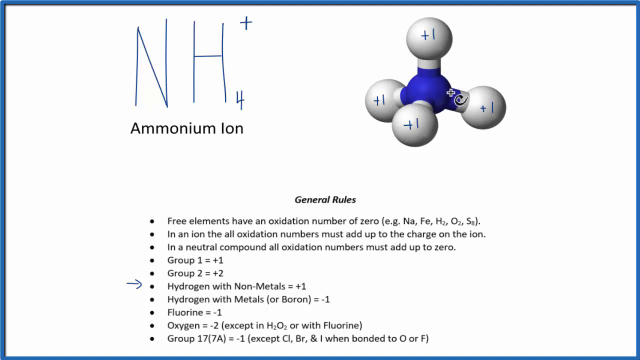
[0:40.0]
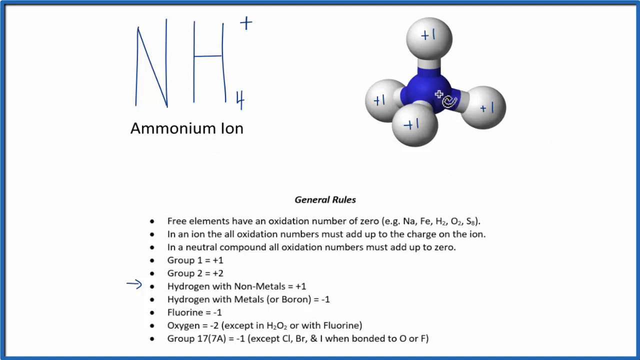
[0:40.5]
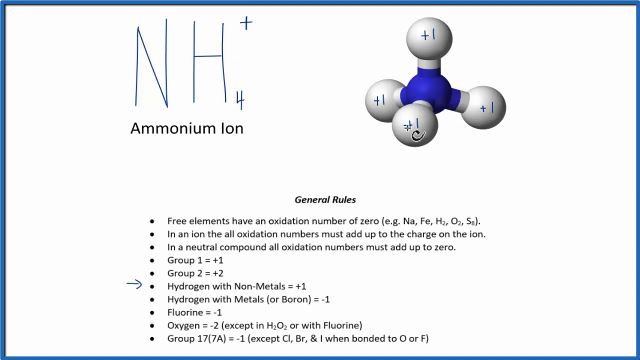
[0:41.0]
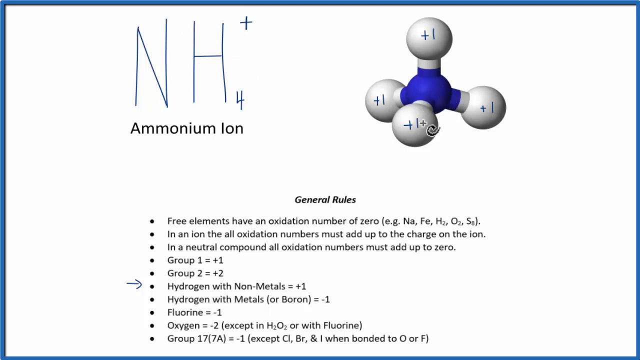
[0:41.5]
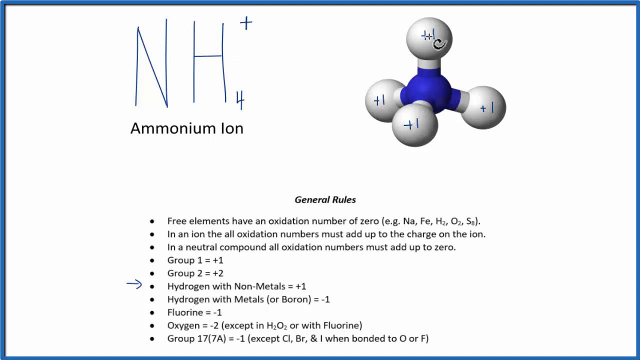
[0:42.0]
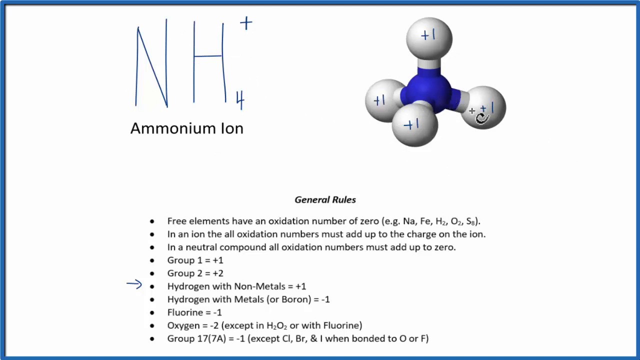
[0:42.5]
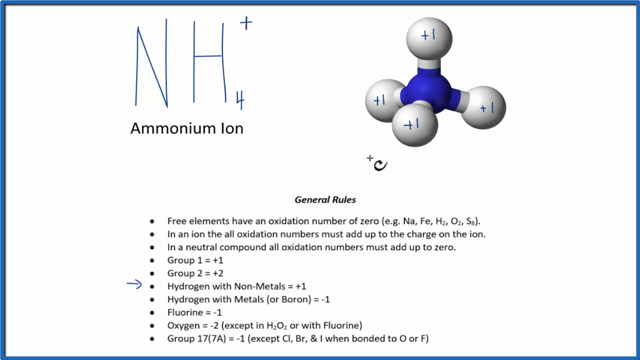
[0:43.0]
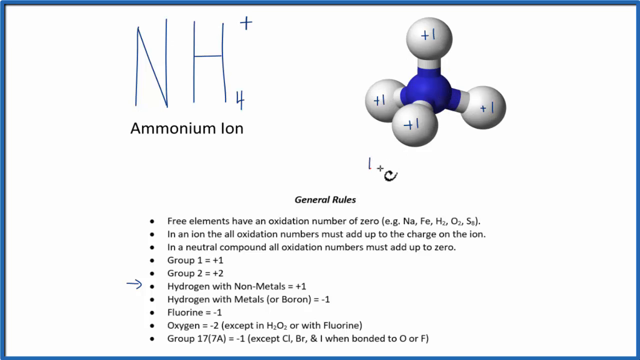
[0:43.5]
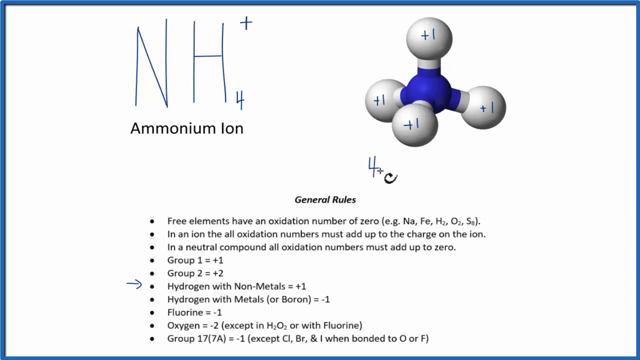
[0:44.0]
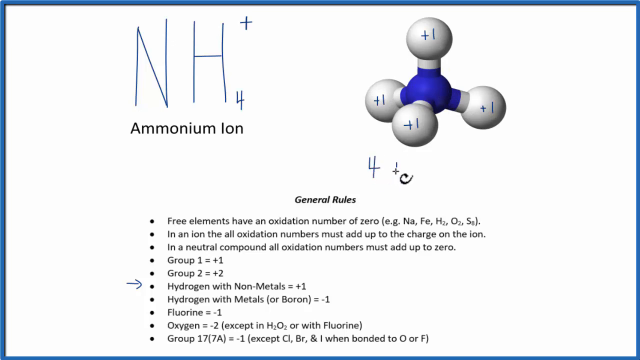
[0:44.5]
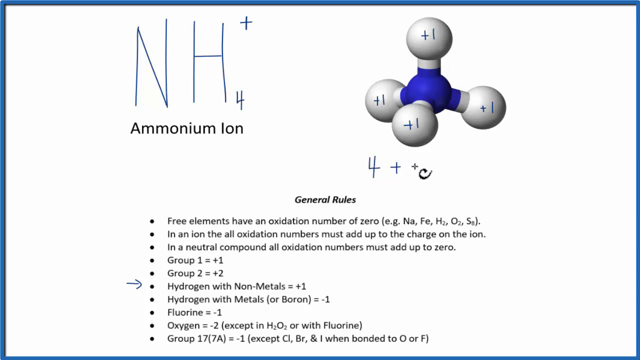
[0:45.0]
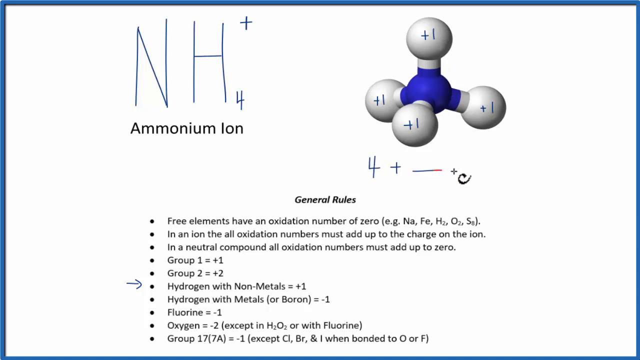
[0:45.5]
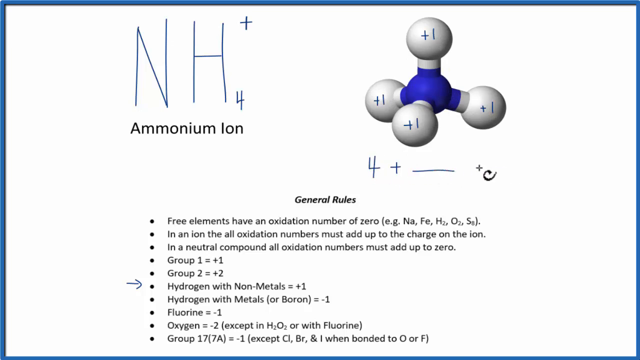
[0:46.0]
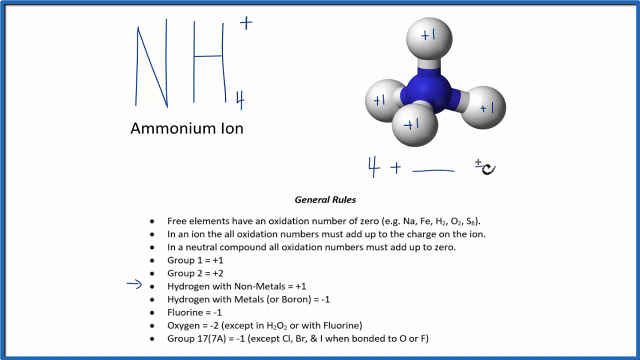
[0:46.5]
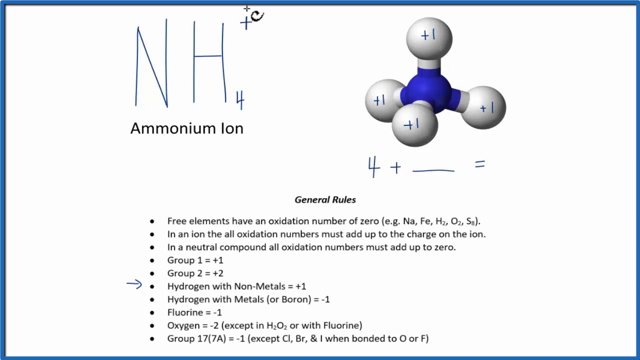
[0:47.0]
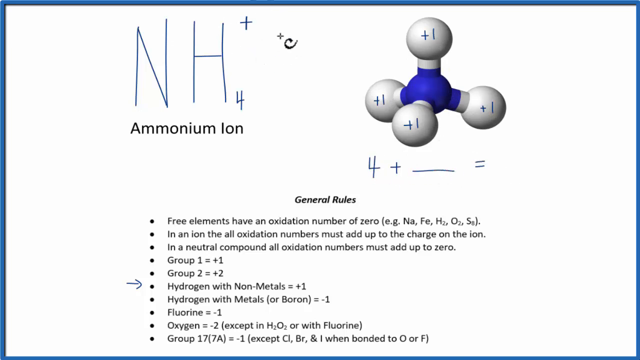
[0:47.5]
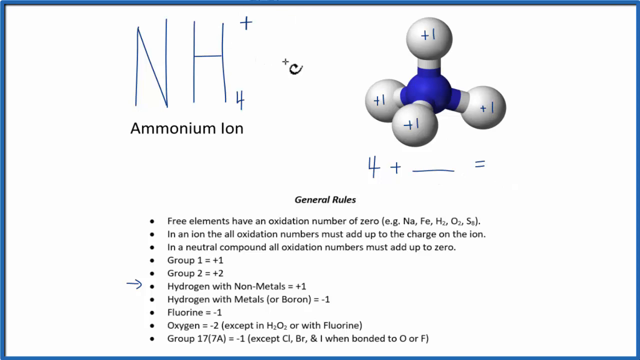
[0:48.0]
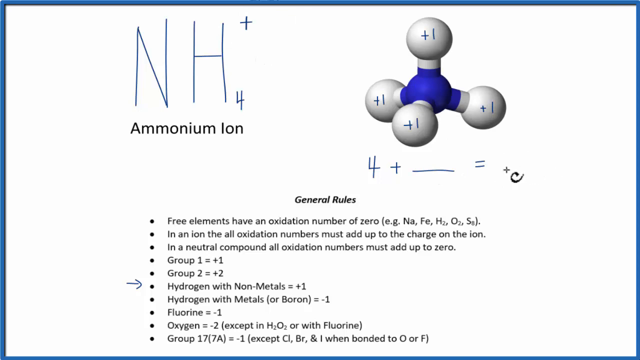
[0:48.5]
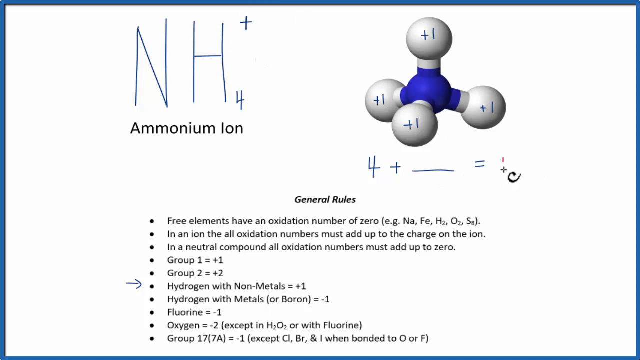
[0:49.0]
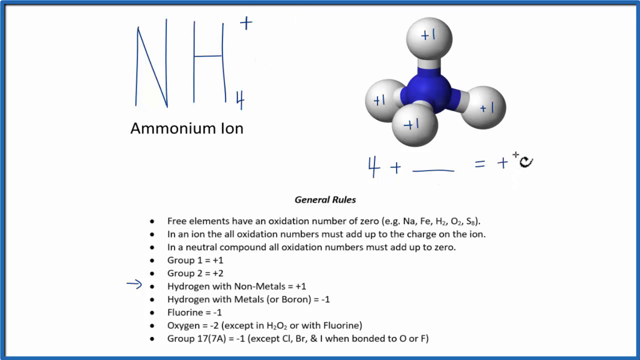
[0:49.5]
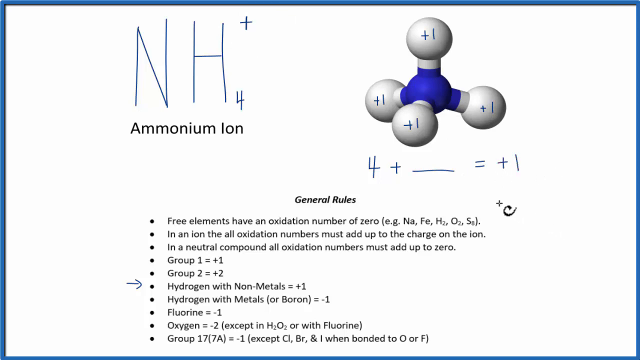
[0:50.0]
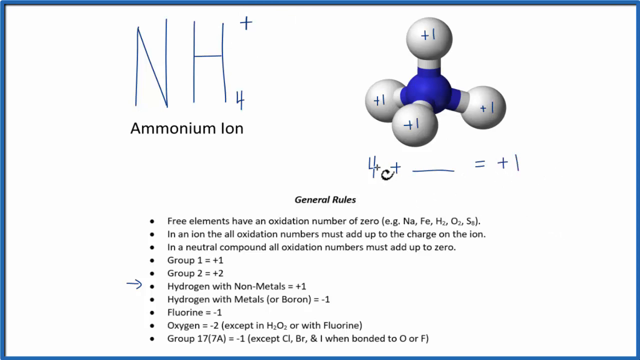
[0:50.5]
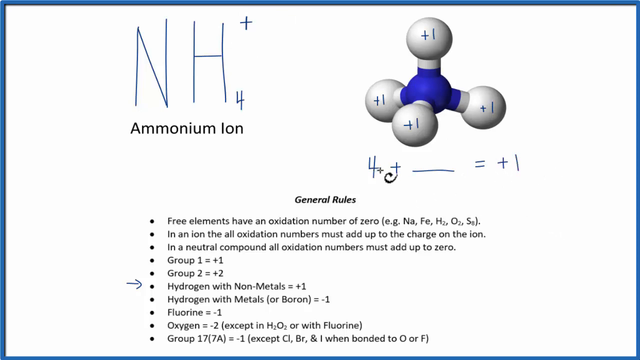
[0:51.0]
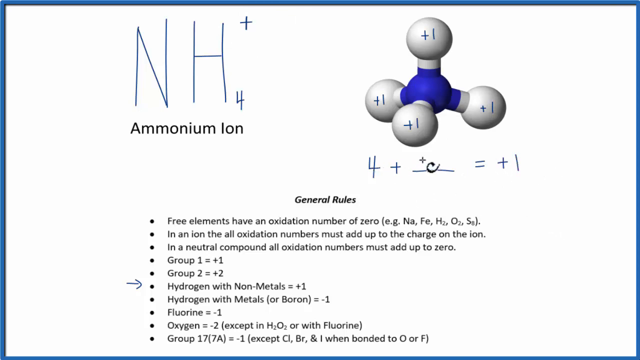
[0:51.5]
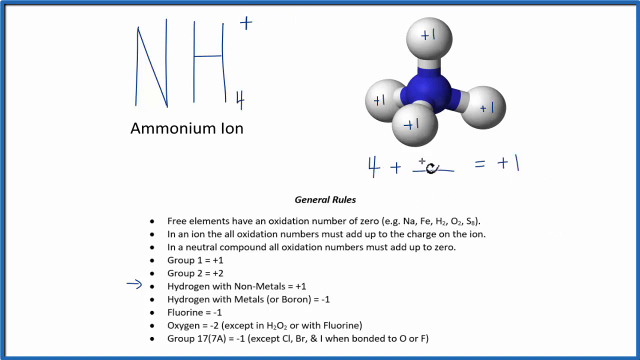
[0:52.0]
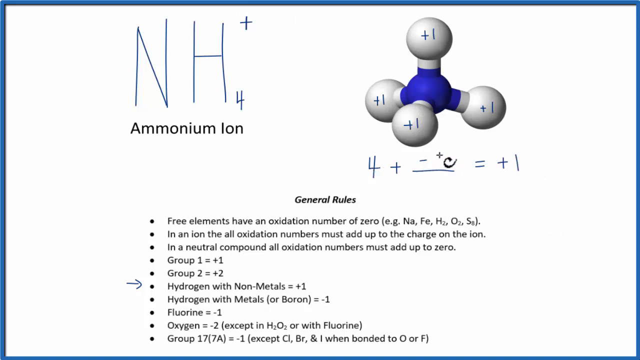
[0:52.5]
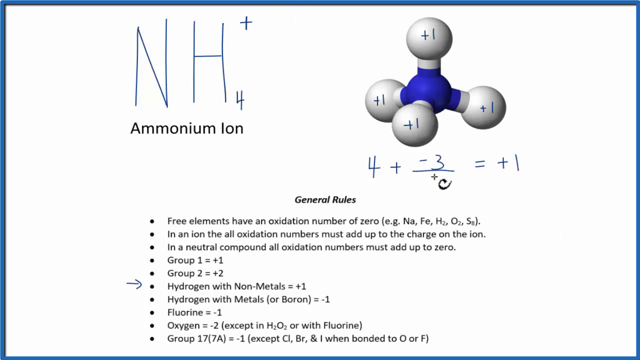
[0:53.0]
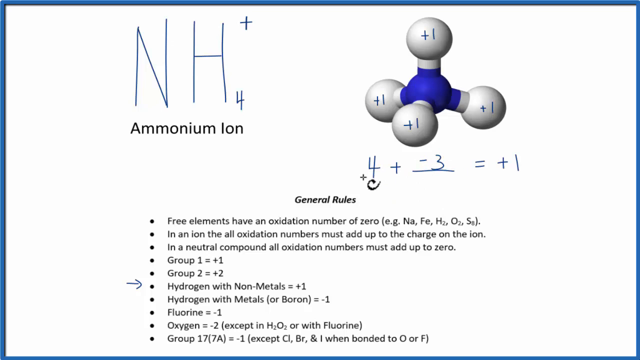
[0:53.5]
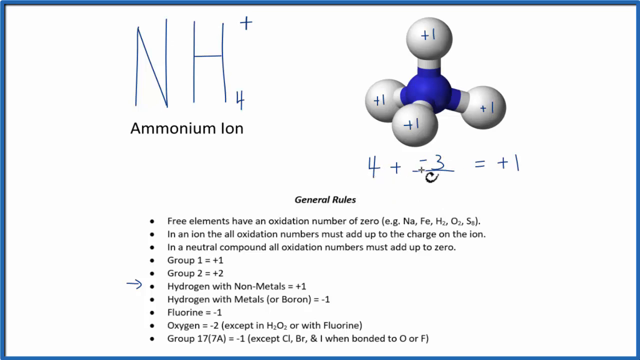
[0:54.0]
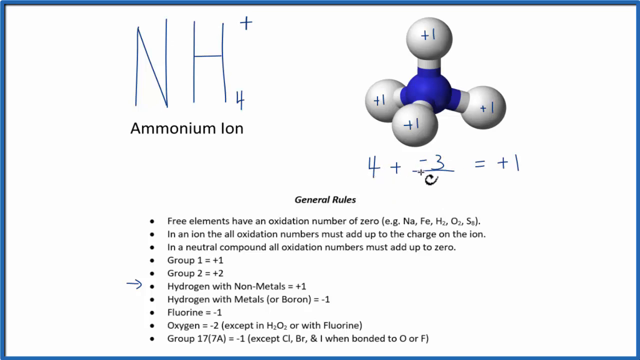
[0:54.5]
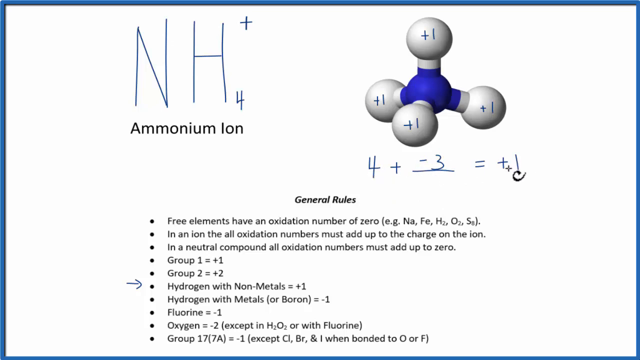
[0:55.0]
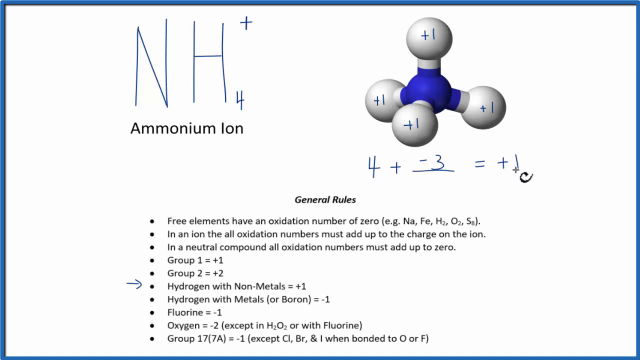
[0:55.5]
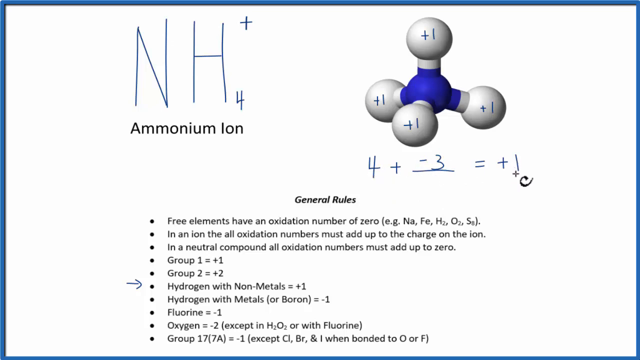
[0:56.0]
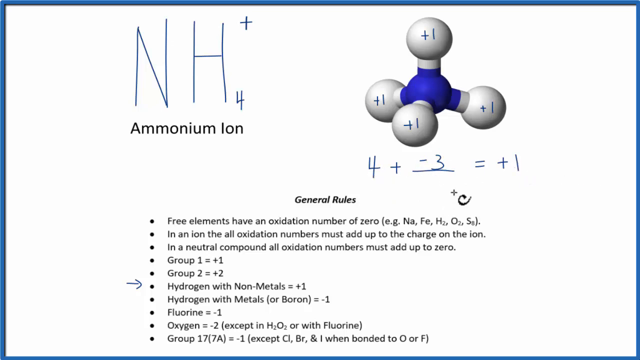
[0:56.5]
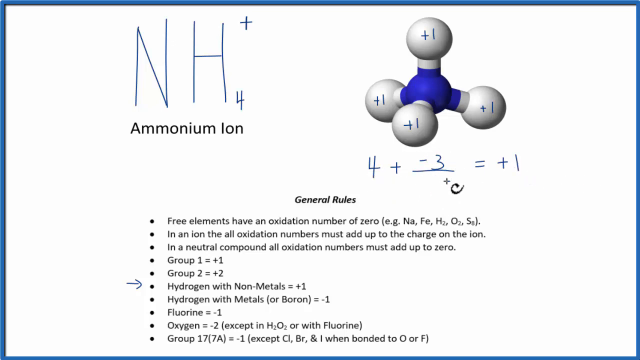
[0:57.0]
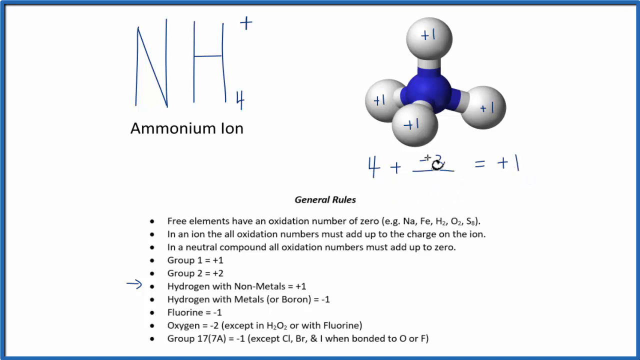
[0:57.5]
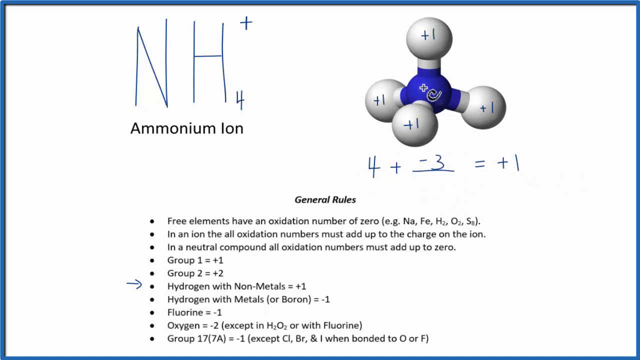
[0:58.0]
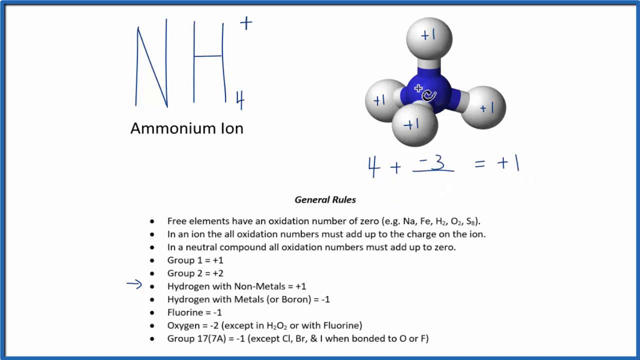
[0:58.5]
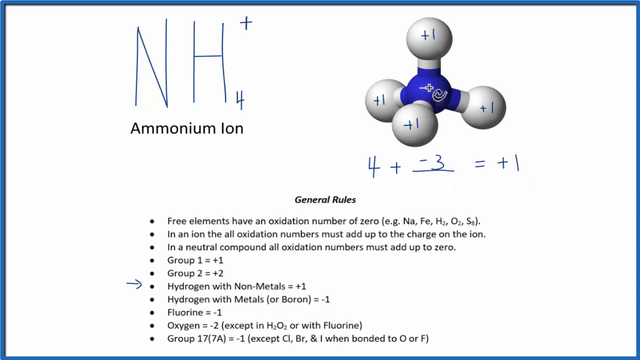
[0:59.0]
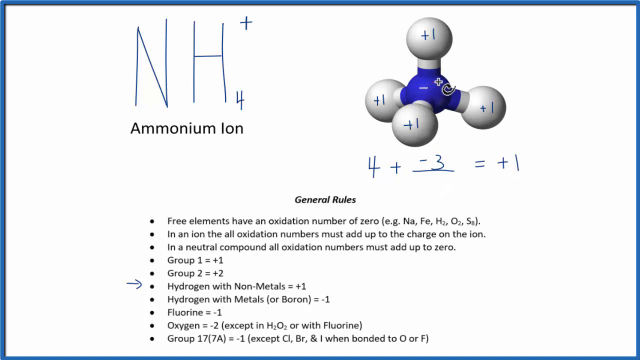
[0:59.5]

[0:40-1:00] The man controlling the mouse points out the plus one charges on the ammonium ion icon and writes a formula, "4 plus minus 3", which gives a result of plus 1. In the center of the icon, among some blue points, there is a minus 3 from this formula.